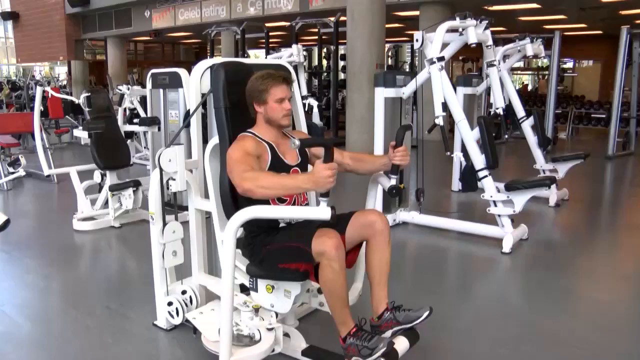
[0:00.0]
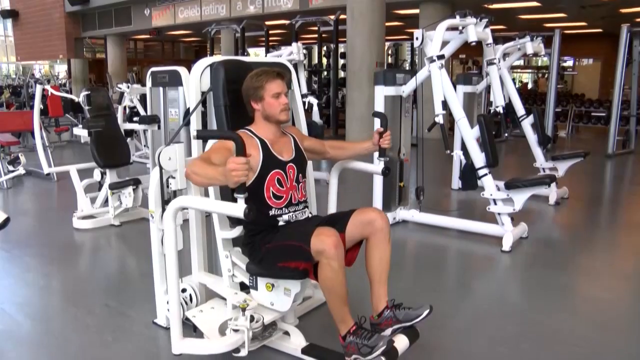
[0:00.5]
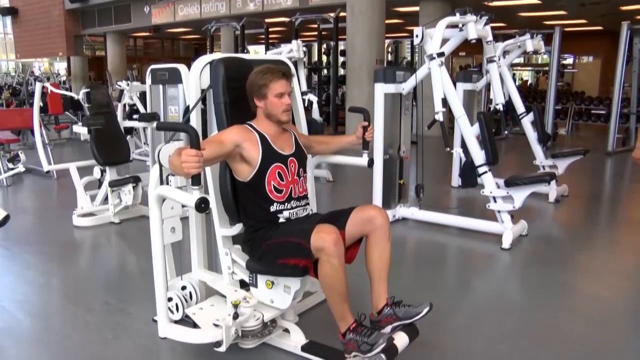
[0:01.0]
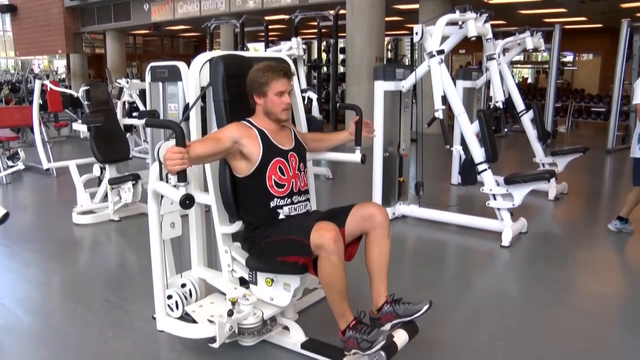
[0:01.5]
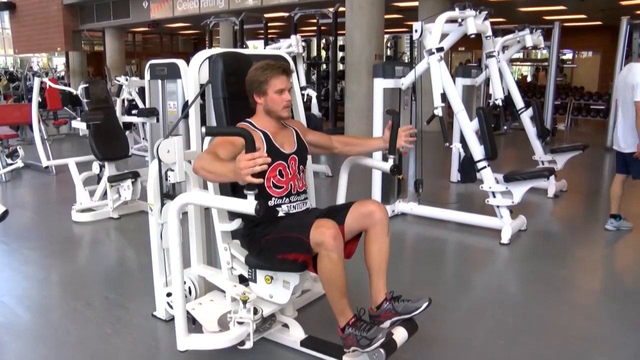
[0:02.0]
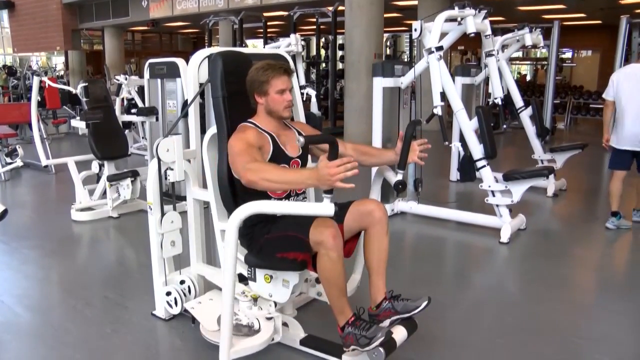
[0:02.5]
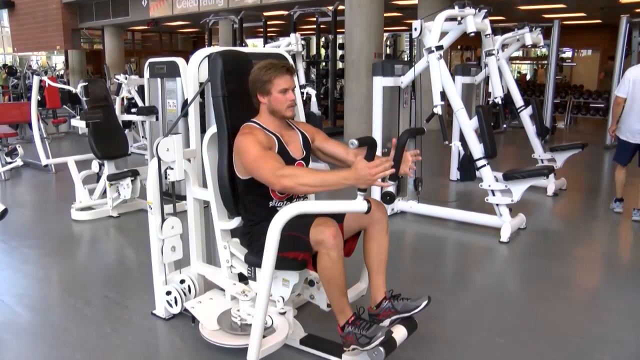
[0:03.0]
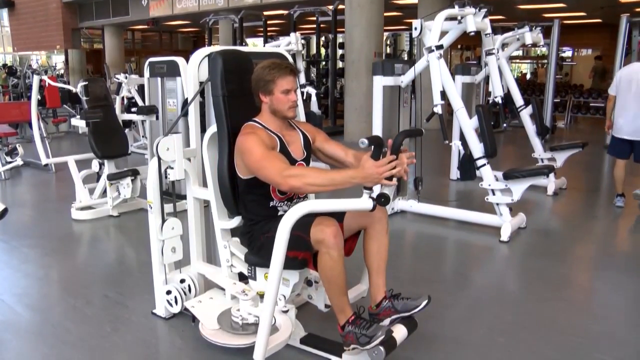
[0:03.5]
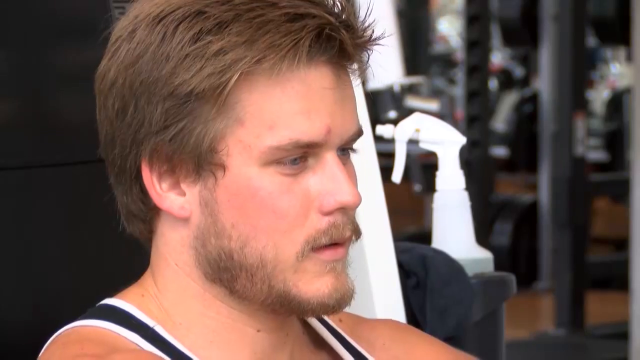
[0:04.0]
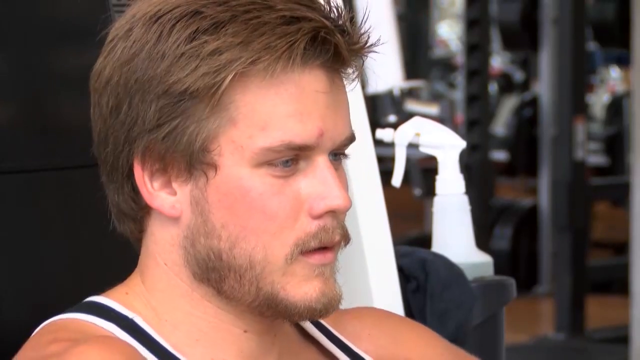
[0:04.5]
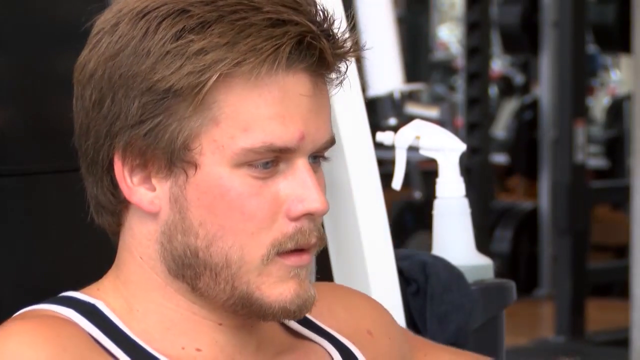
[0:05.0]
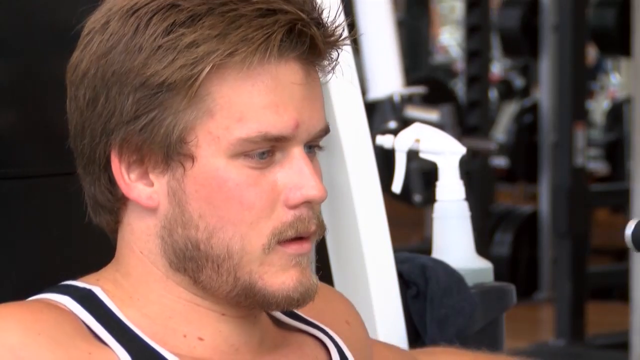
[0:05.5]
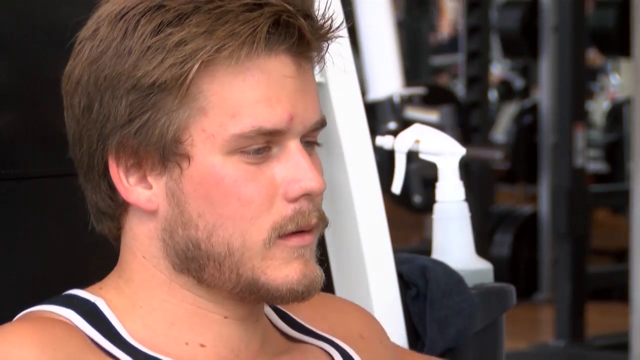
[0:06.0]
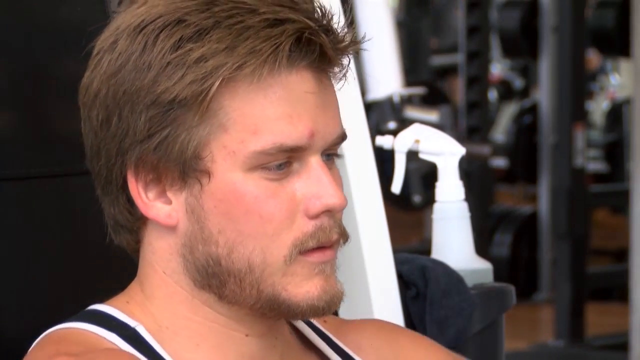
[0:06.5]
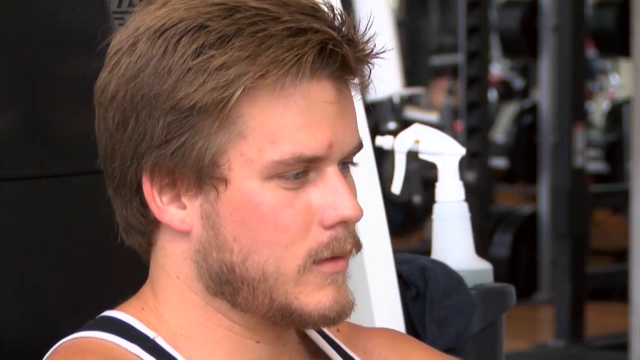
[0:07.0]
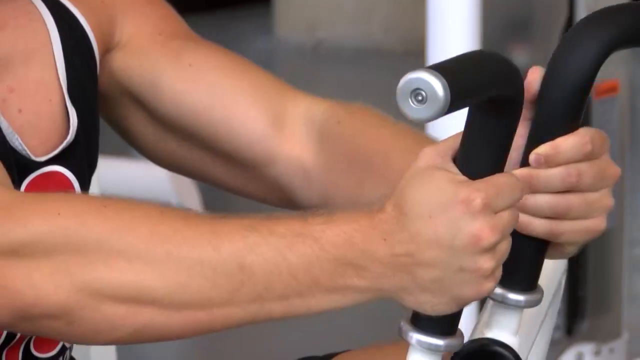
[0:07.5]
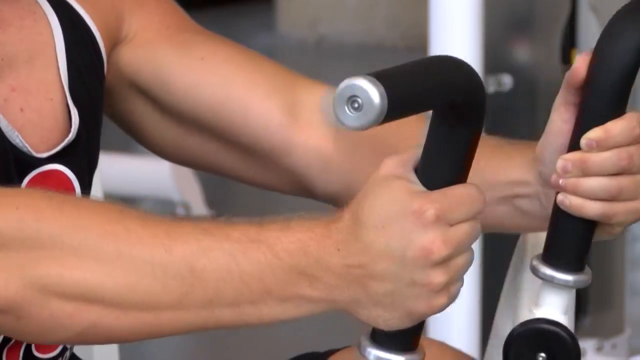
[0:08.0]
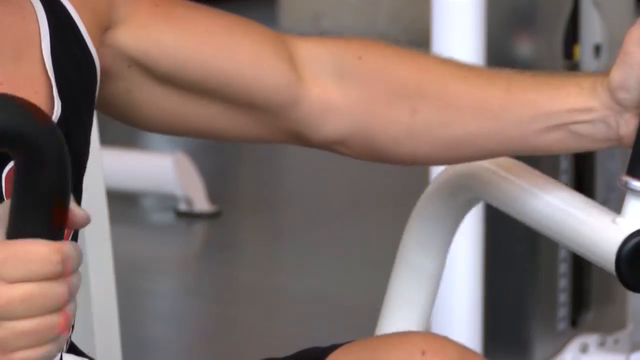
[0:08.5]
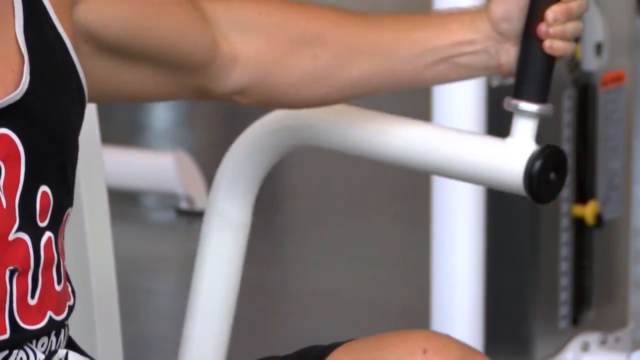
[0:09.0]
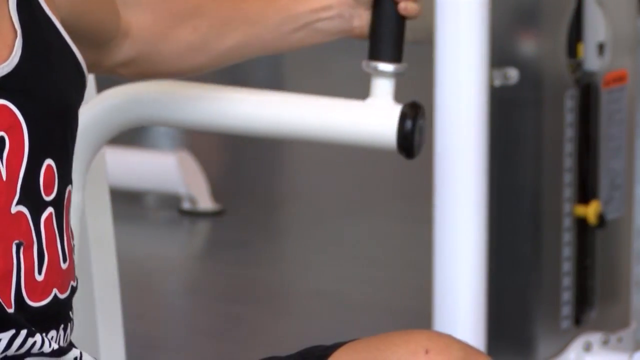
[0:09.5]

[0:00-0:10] The video is set in a gym that is quite empty apart from the man who is the focus of the shot. He is in the center, with a variety of gym equipment behind him. The machine he is on is completely white apart from a black seat that he is sat on. With his hands outright on the machine, he does butterflies, using the machine rather than dumbbells. The man is white and very muscular, wearing a black t-shirt and black shorts, both with red detailing. He has quite skinny legs, so he is clearly upper-body focused. As he pulls his arms back he keeps them in line with his back and shoulders, then pushes the weights together in front of him. The camera angle changes to focus just on his face, shown in side profile looking toward the right of the screen; he looks like he is struggling and out of breath. The image then changes to a close-up of his hands gripped tightly around the black frame being used for the weight.